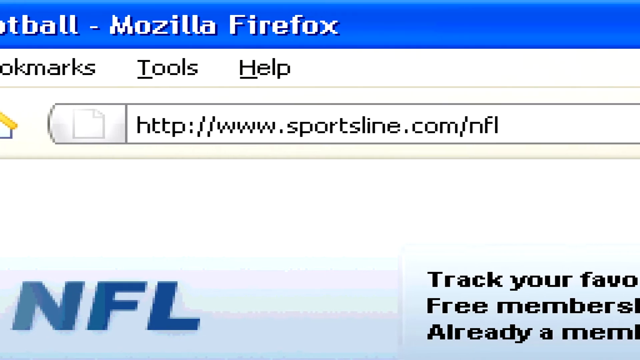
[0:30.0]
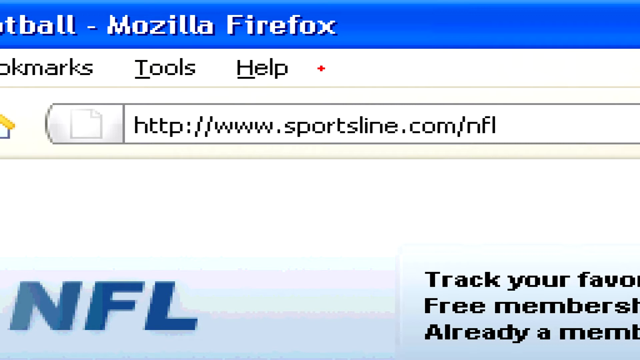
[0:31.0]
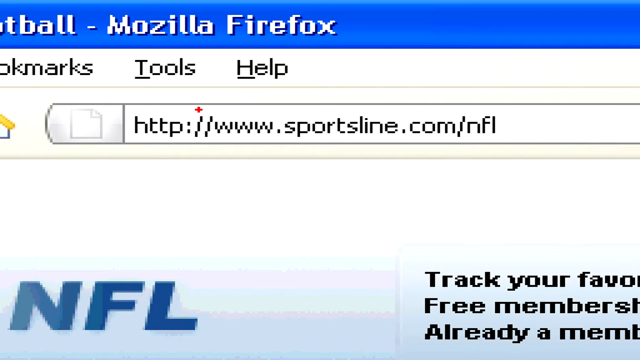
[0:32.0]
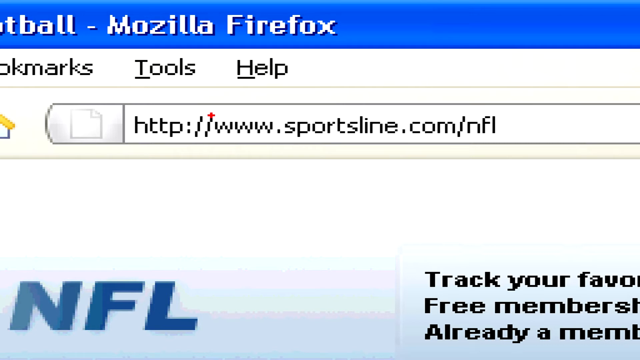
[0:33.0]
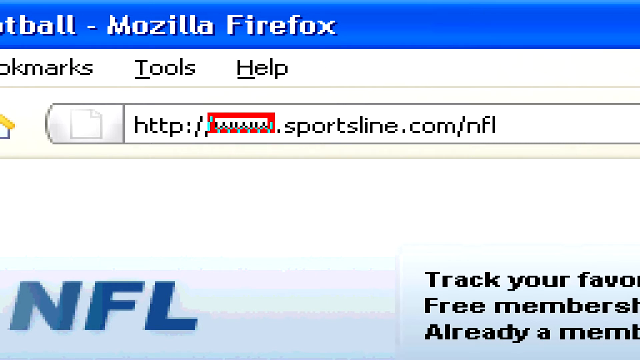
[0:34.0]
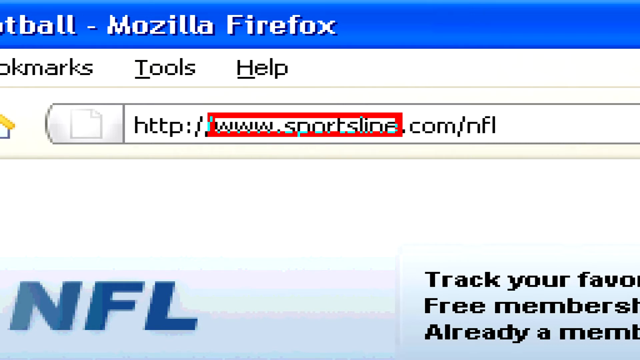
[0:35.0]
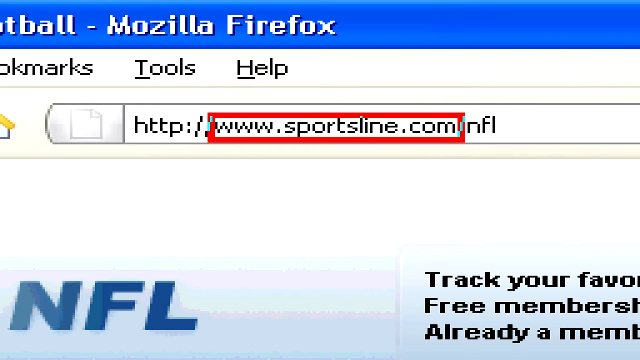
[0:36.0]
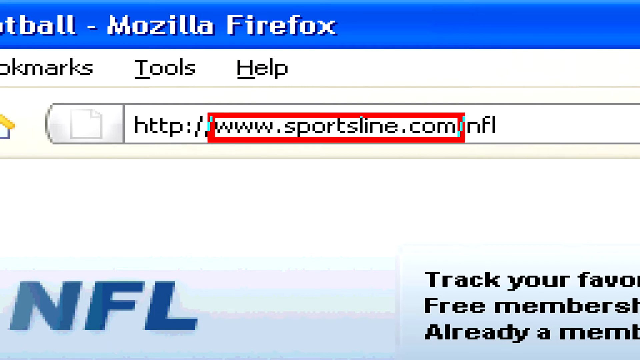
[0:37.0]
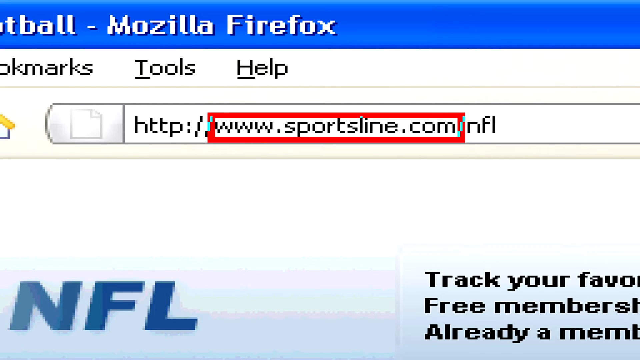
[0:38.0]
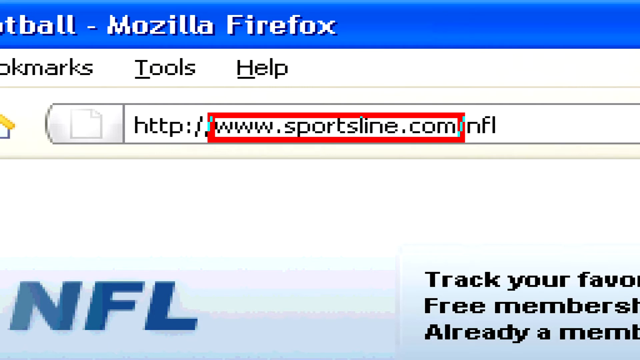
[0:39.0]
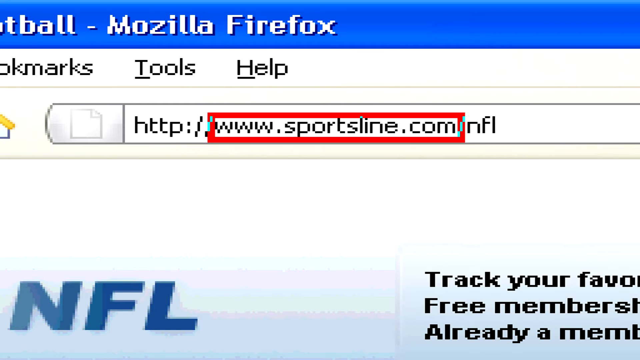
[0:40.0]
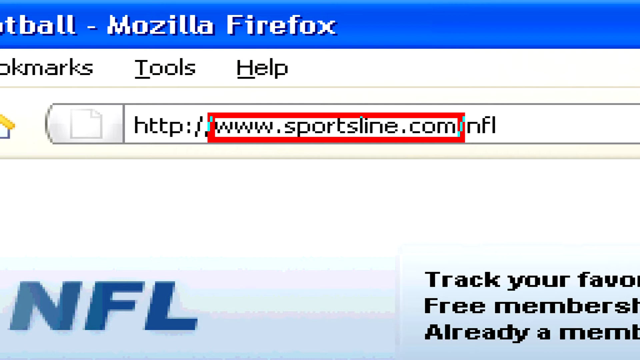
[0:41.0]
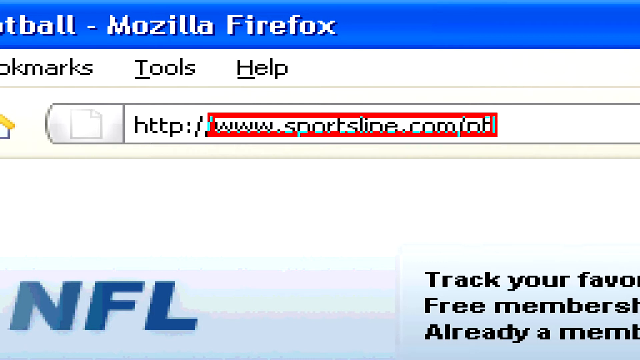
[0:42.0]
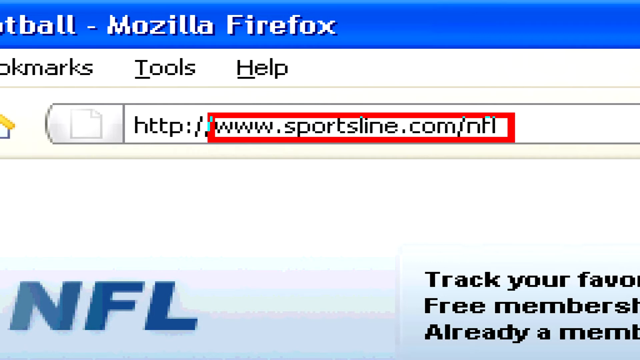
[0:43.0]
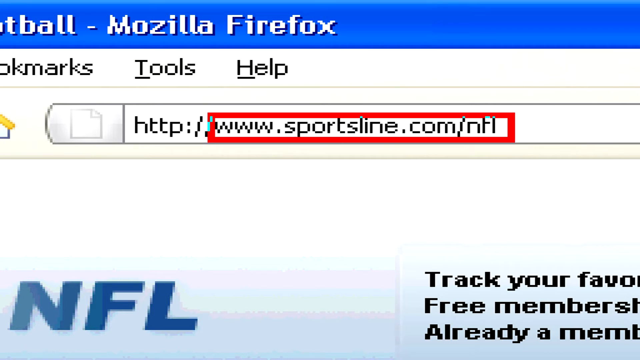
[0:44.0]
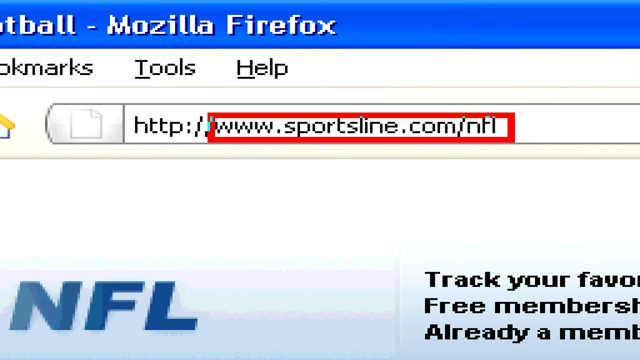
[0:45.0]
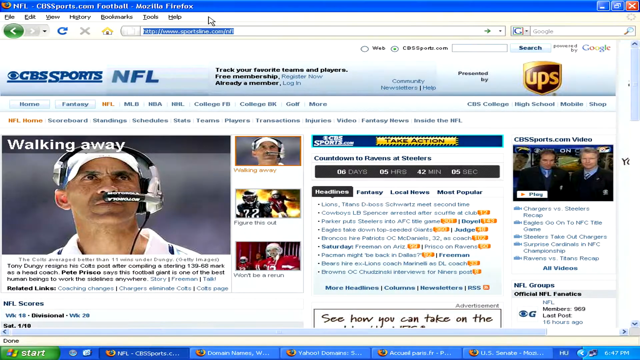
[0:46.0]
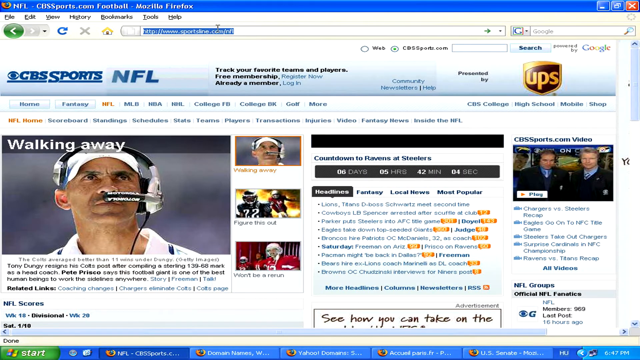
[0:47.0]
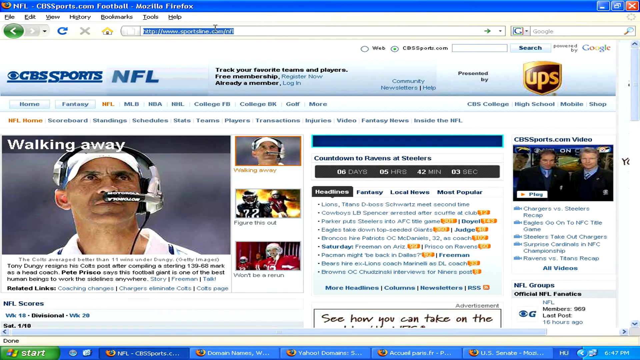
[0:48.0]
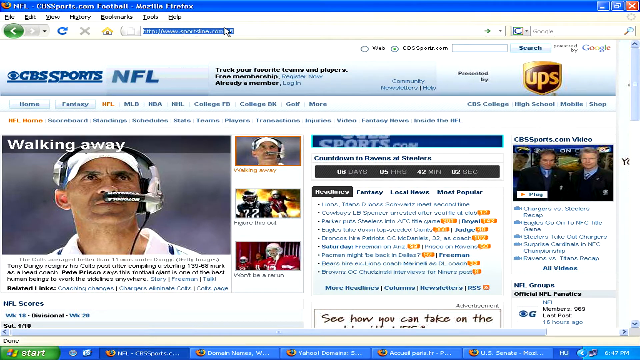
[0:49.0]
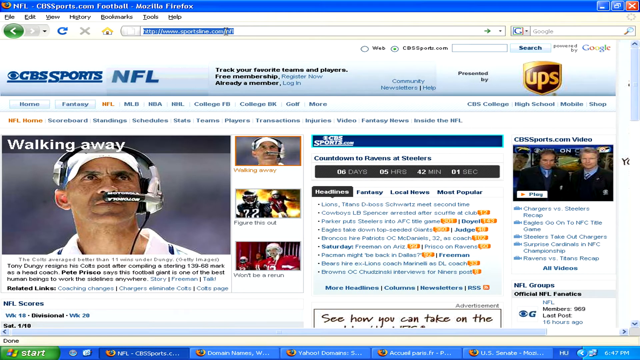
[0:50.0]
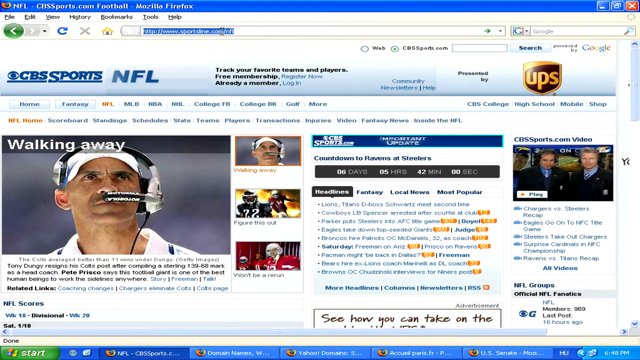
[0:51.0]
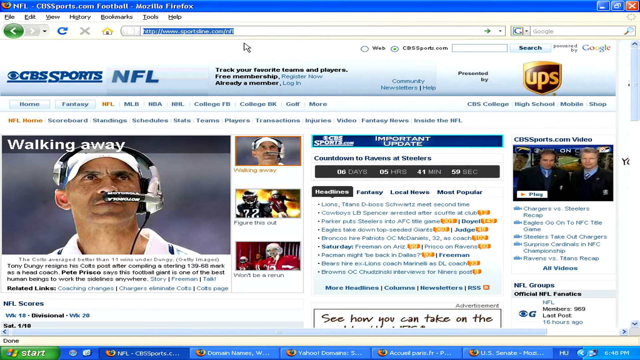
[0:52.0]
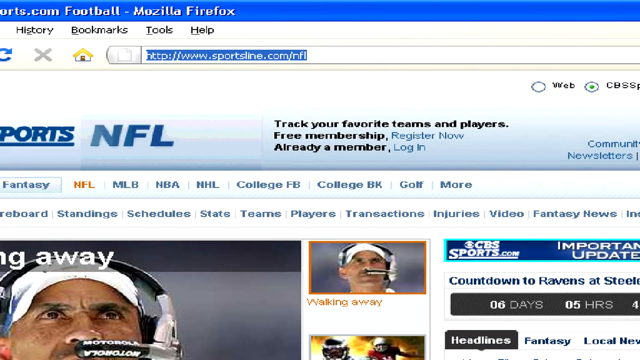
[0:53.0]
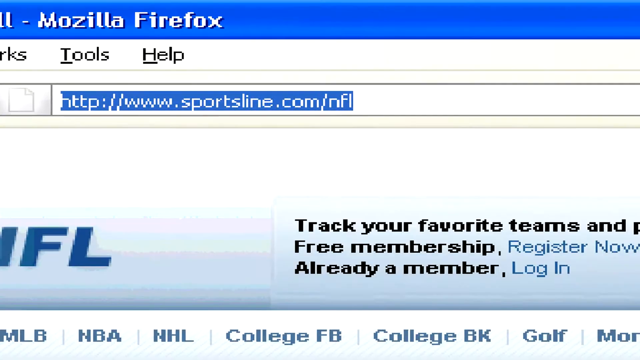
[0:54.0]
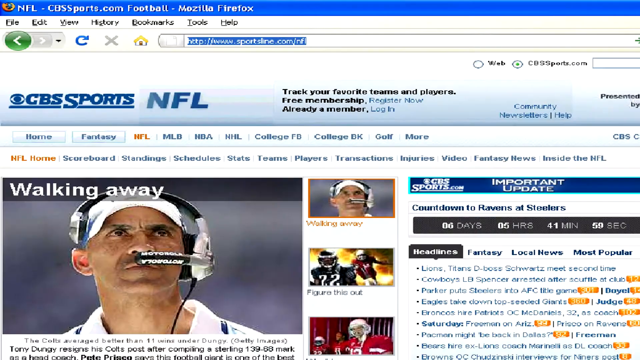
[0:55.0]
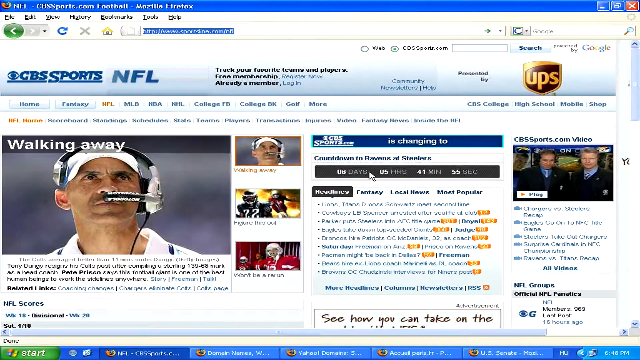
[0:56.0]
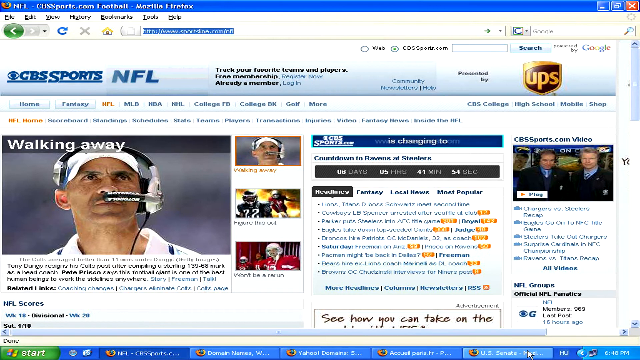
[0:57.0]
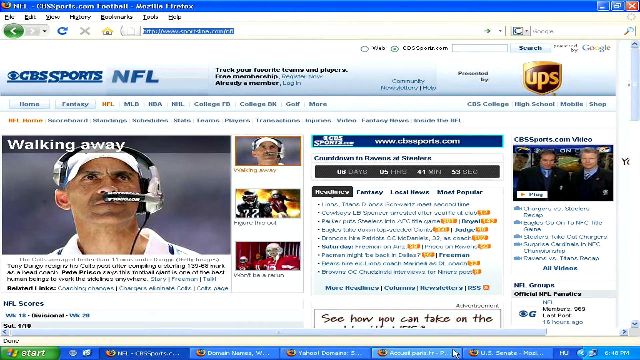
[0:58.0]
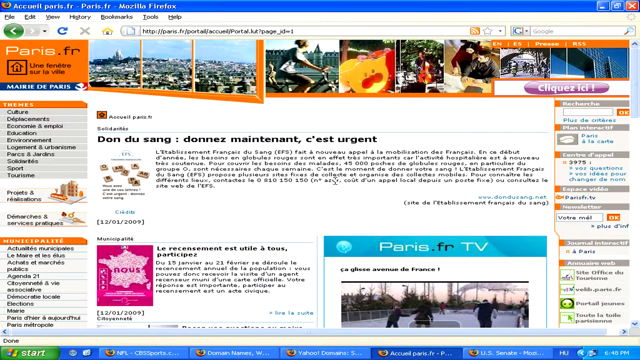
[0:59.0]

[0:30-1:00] The browser is Mozilla Firefox; "Mozilla Firefox" appears at the top in white text on a blue background. The pointer is a little red diamond-like pointer with a plus sign. He seems to highlight the forward slash and the www.sportsline.com part, clicking and dragging to create a red outline box around it. He then expands the box to include the NFL part. Underneath, the view looks pixelated and jagged, apparently because he is zoomed in so much. "NFL" appears in all caps, on a blue that goes from lighter to medium and darker blue from left to right, with an off-white or light blue color to the right. A slightly bigger box apparently reads "tracking your favorite team", with part of it cut off, along with "free membership" and apparently "already a member". The edges of all the letters look jagged and pixelated. He zooms out, and the address is highlighted in blue at the top, showing the full NFL website. As he moves over the lettering of the URL, the white pointer changes to an I-shaped cursor. He zooms in again in a jerky motion and zooms back out, in a way that is a little dizzying. He then goes to a Paris, France website in a different language, paris.fr, which has an orange box with a little house. It shows snippets of the town of Paris: people biking, what looks like a Pikachu or Kirby with a red ribbon on the front, and a couple of kids looking at some paperwork at a desk, who also might play an instrument.